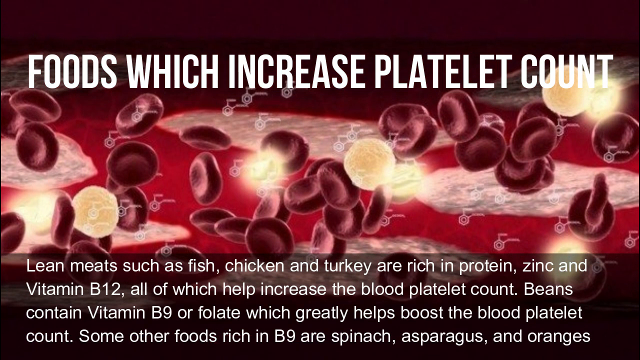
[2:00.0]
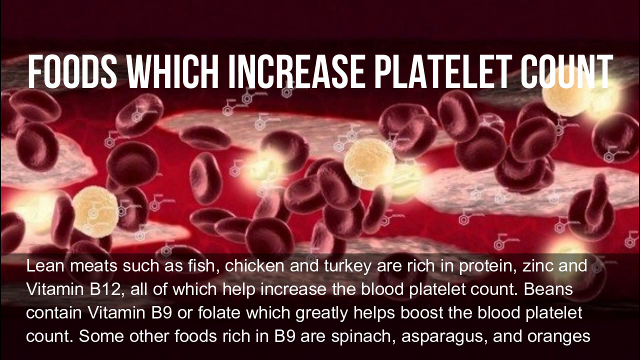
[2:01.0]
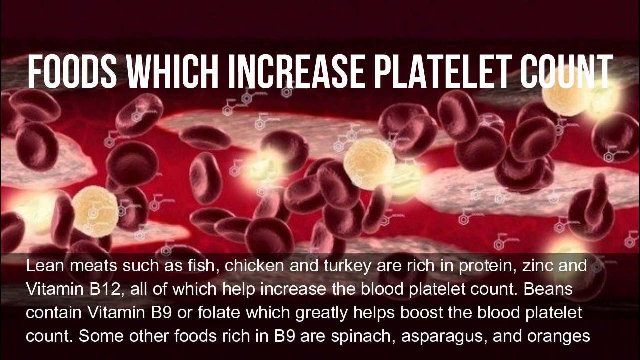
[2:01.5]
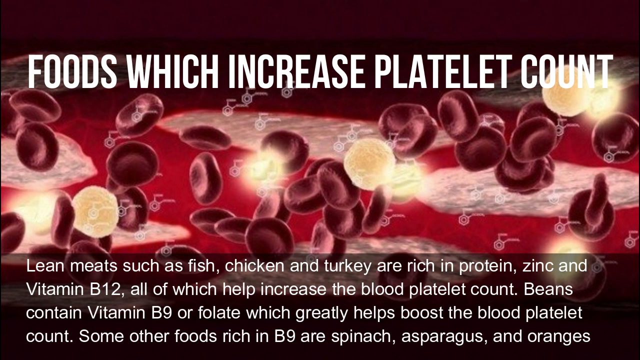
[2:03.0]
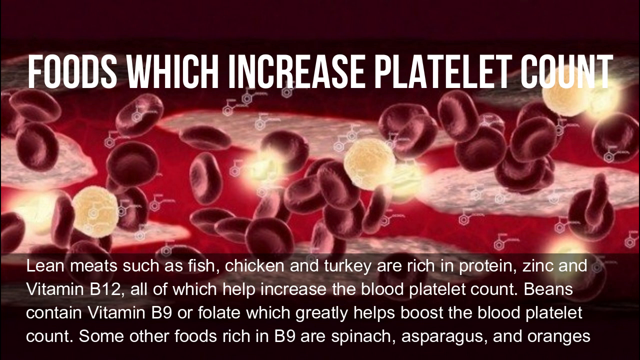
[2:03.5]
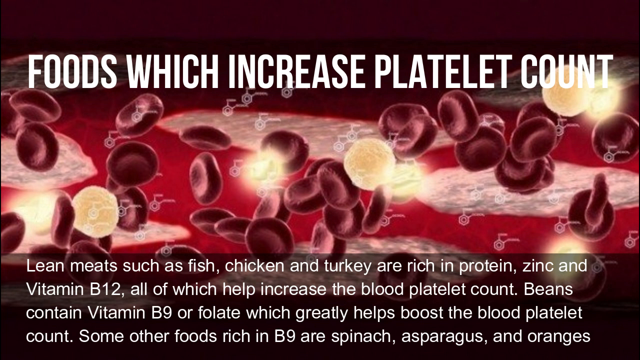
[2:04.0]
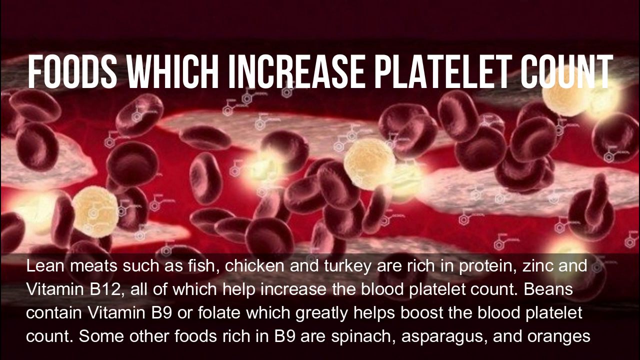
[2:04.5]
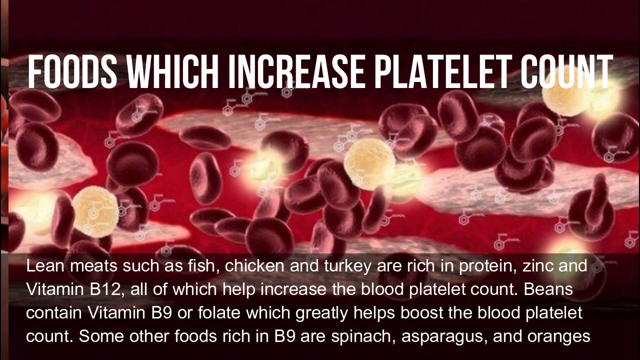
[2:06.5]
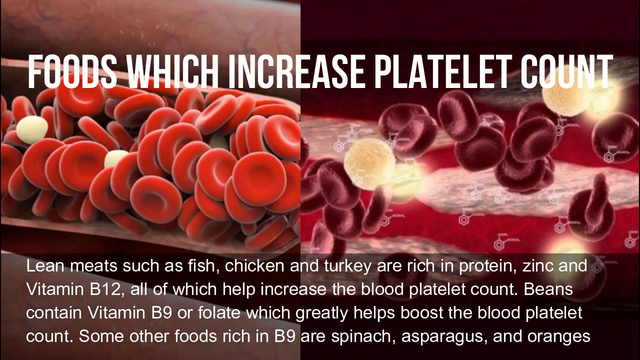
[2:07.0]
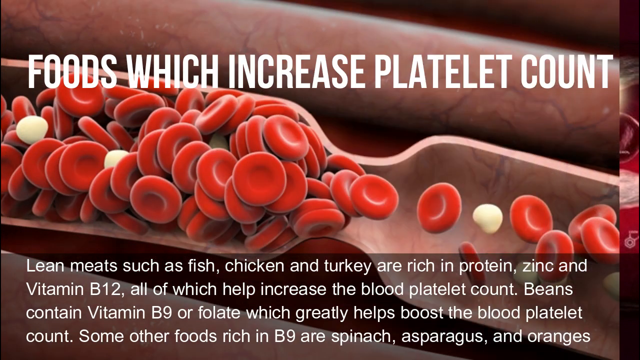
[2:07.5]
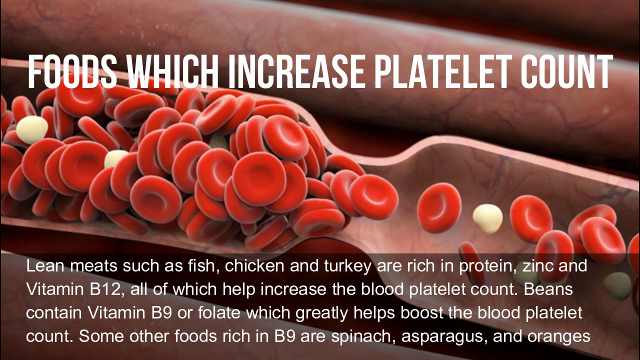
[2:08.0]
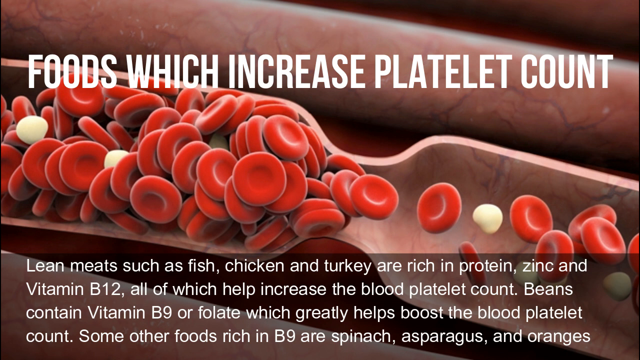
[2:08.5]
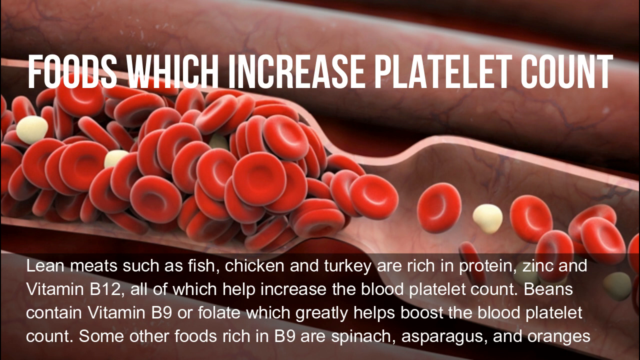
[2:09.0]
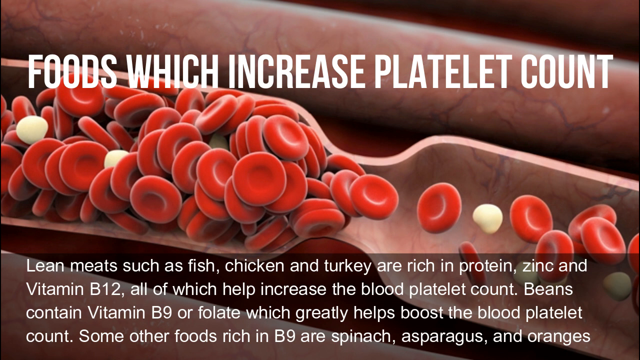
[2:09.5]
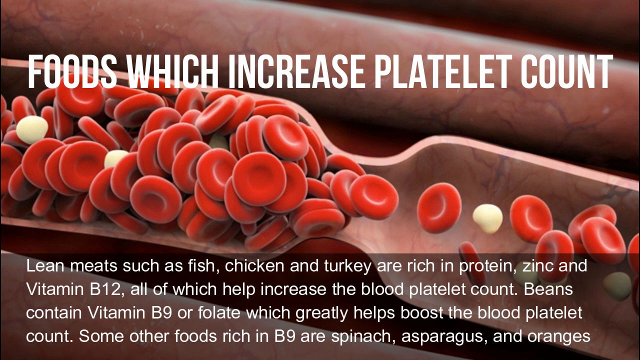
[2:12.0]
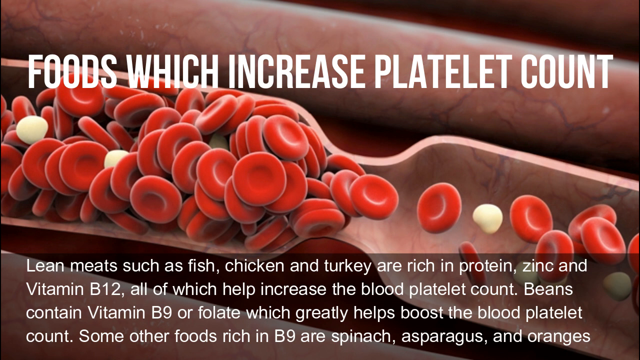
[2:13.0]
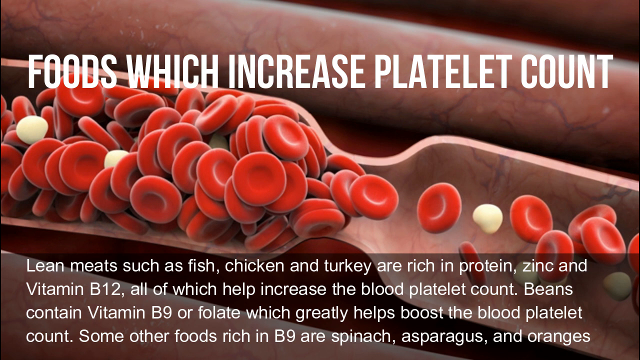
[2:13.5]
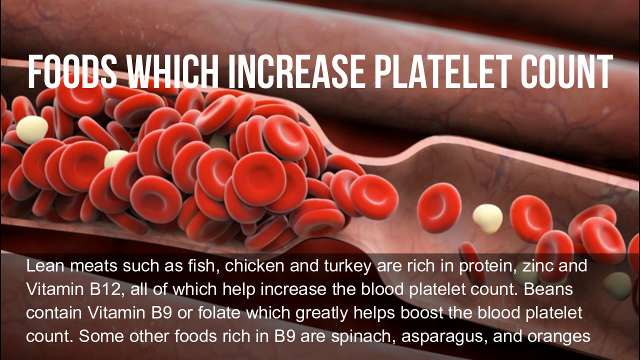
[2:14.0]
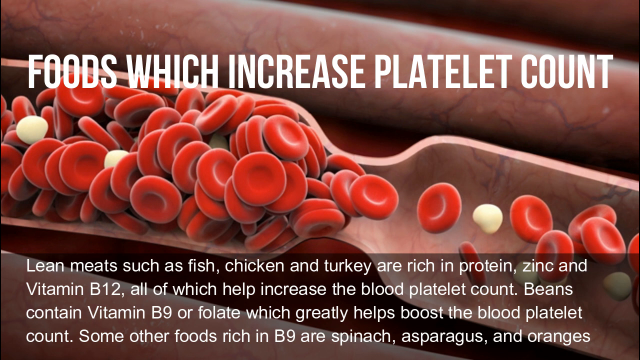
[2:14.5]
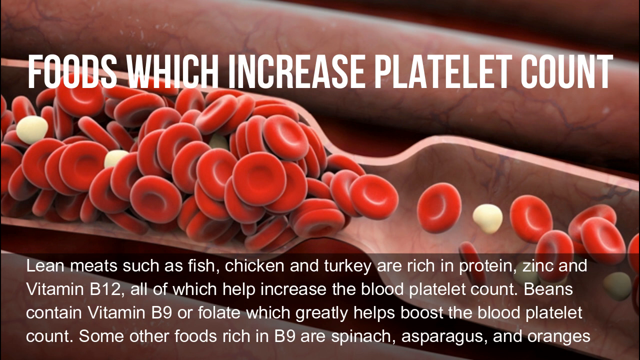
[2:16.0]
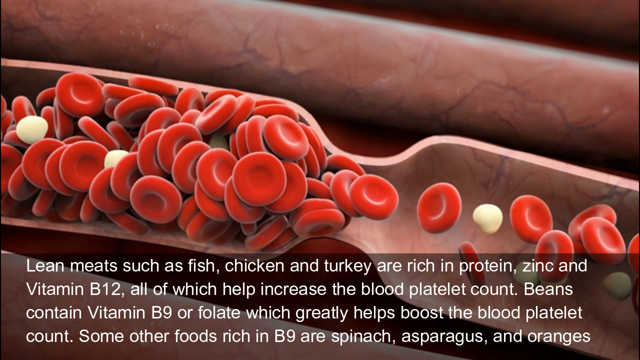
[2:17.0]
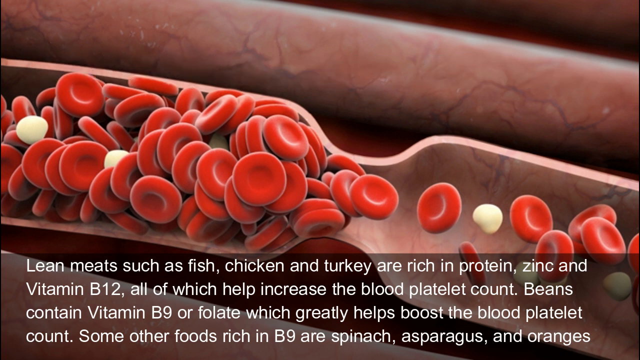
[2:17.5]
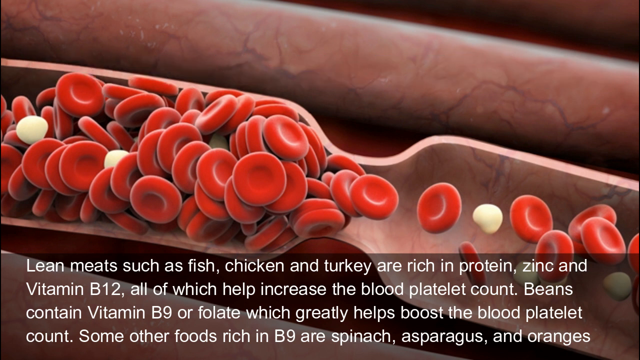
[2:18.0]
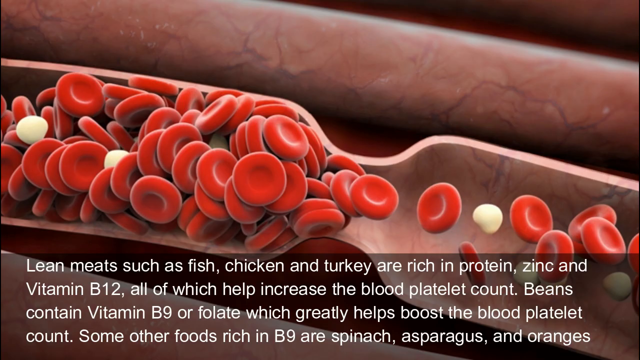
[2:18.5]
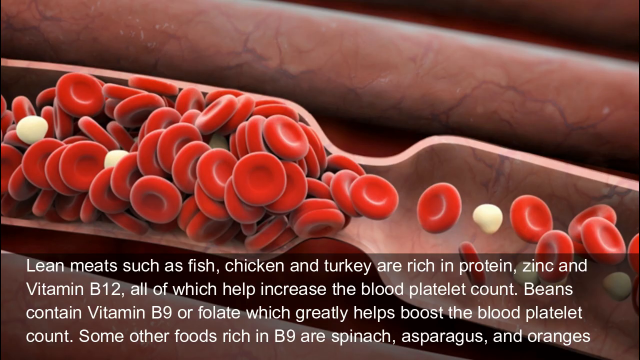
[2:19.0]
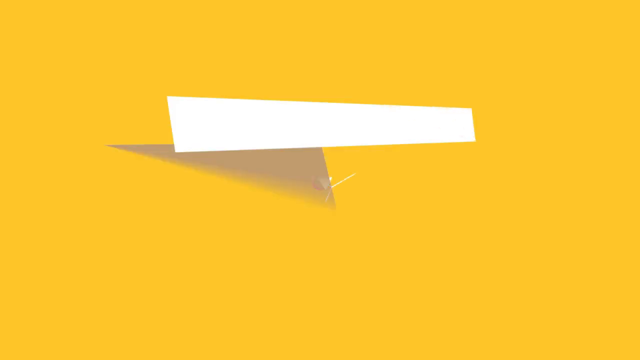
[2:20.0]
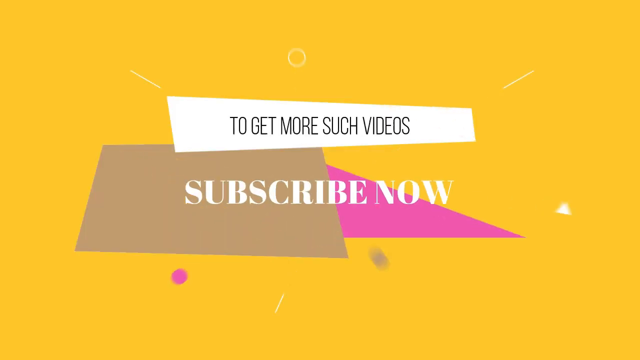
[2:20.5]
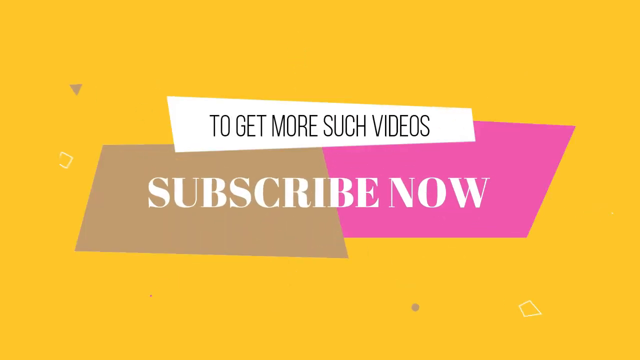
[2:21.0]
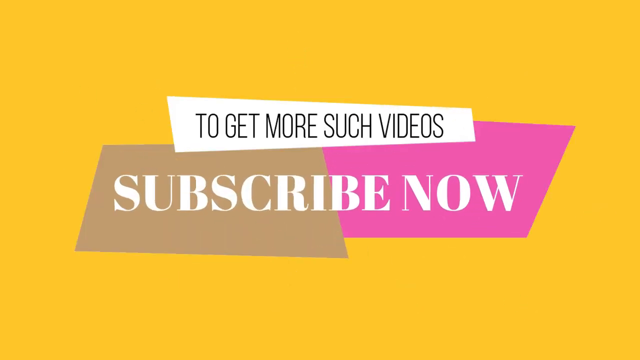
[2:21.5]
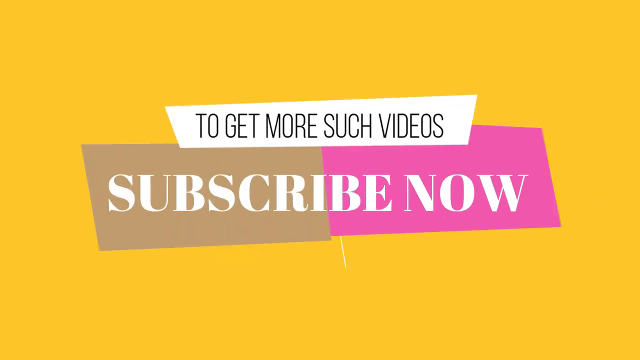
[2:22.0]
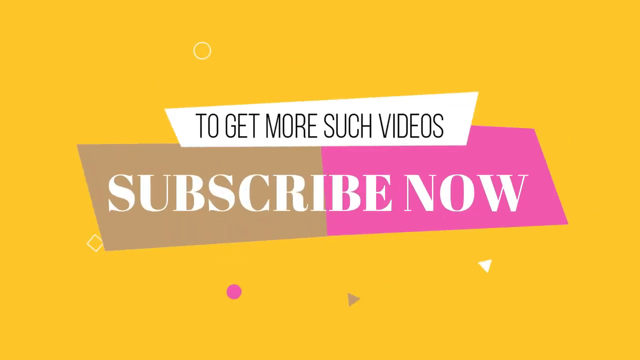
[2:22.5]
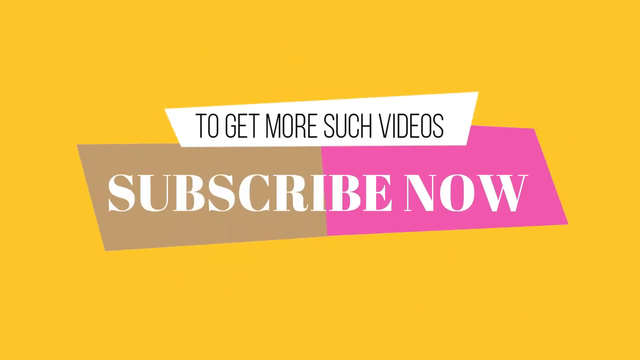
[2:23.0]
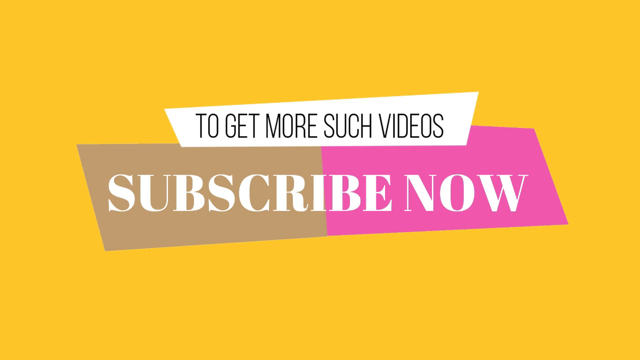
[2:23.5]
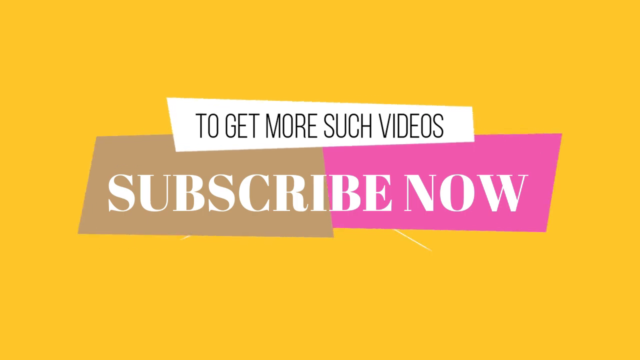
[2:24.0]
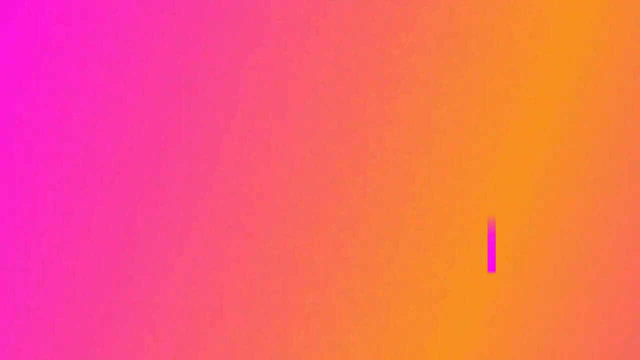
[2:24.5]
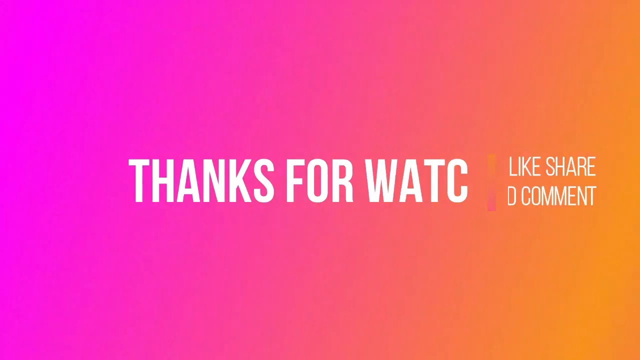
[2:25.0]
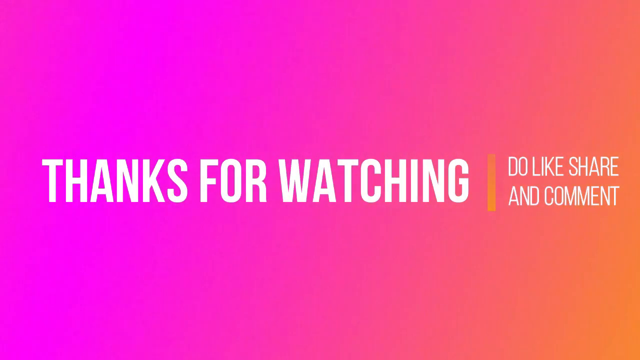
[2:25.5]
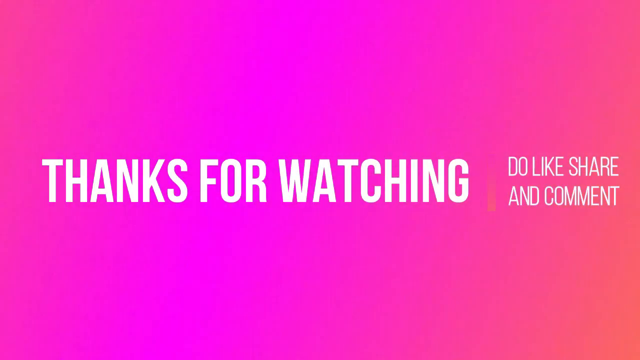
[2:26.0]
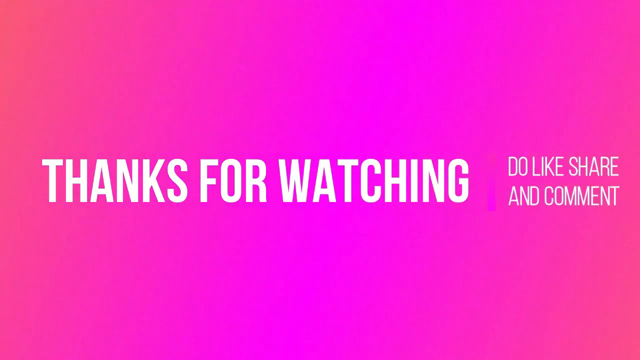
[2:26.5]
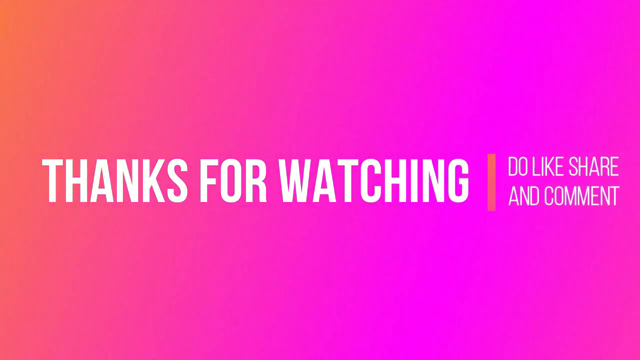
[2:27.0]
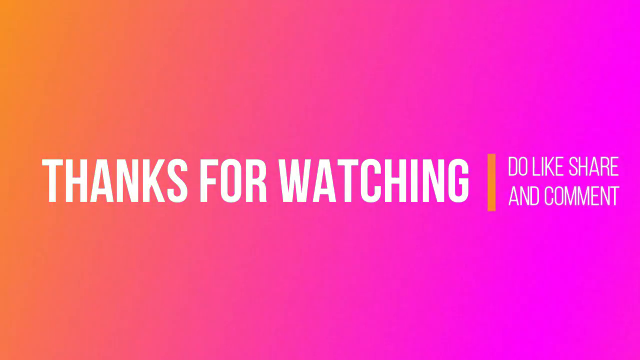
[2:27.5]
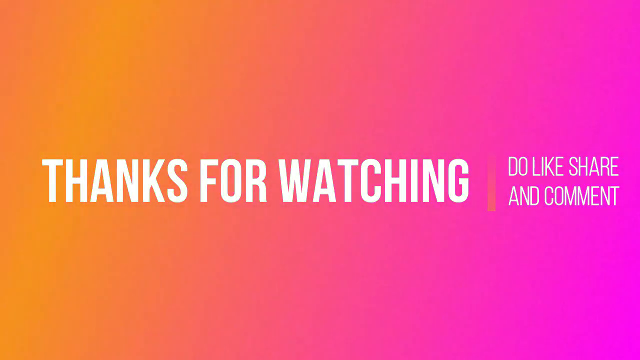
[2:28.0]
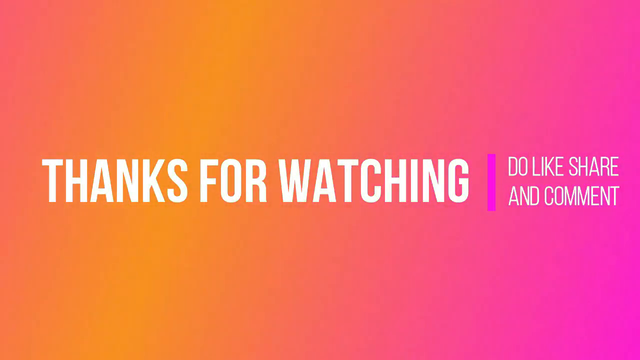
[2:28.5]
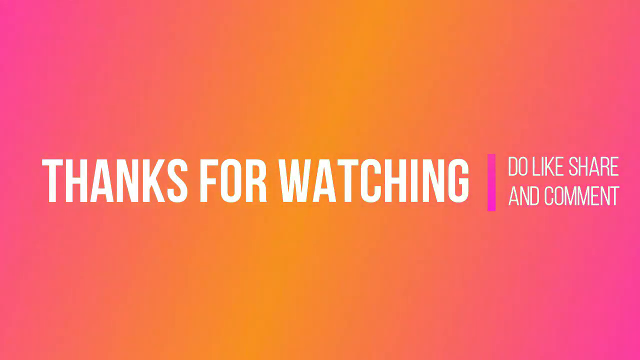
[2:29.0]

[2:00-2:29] The words "foods which increase platelet count" appear with the text "Lean meats such as fish, chicken, and turkey are rich in protein, zinc, and vitamin B12, all of which help increase the blood platelet count. Beans contain vitamin B9 or folate, which greatly helps boost the blood platelet count. Some other foods rich in B9 are spinach, asparagus, and oranges." An illustration shows red blood cells moving through a blood vessel along with a couple of other white objects flowing alongside the erythrocytes. Next, a yellow background appears with a white shape bearing the words "to get more such videos, subscribe now." The words "subscribe now" are against a beige background and a pink background, and these shapes slightly change size and shape. Then the words "thanks for watching, do like, share, and comment" appear in white letters against a bright pink background.